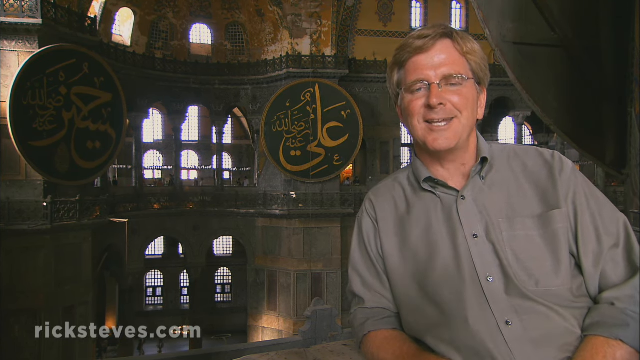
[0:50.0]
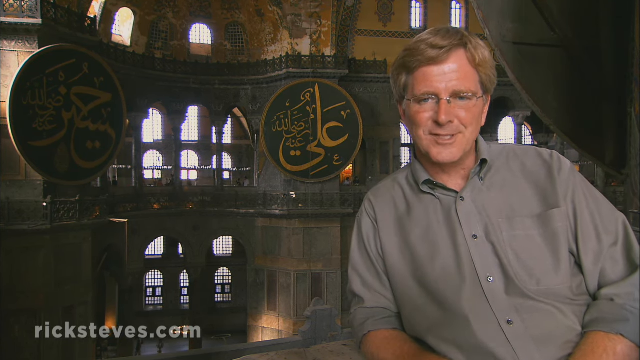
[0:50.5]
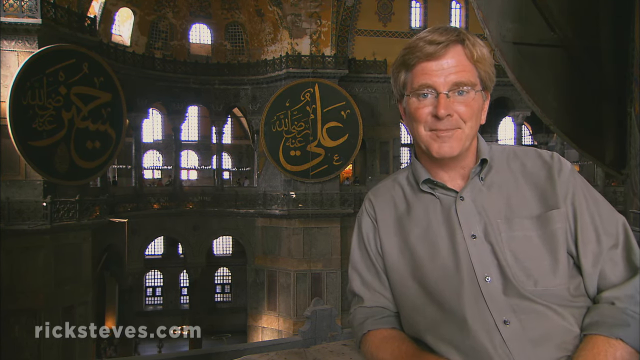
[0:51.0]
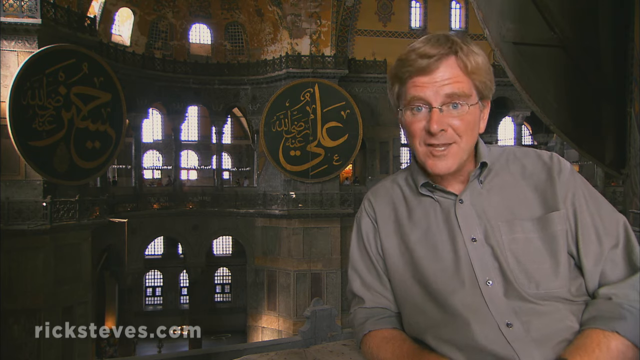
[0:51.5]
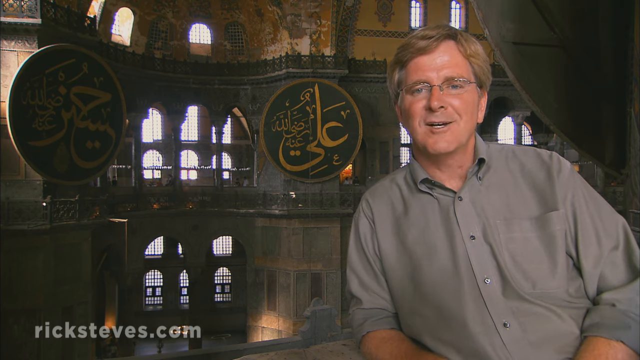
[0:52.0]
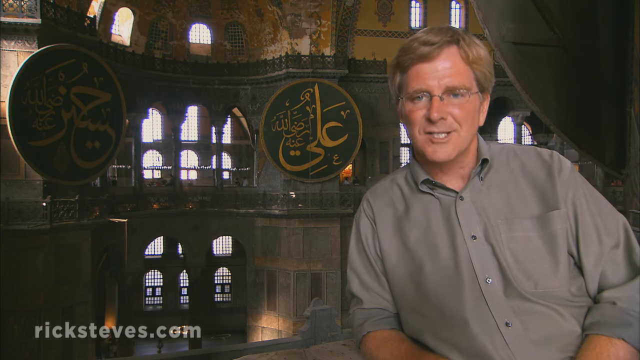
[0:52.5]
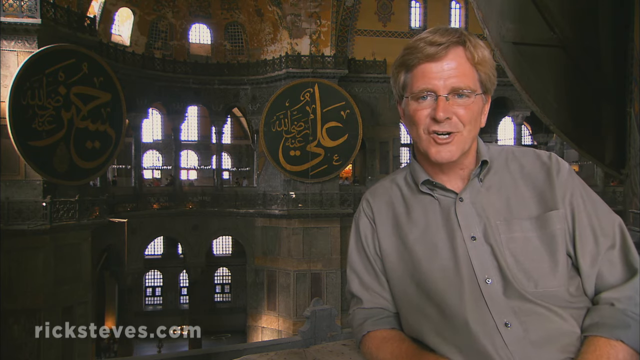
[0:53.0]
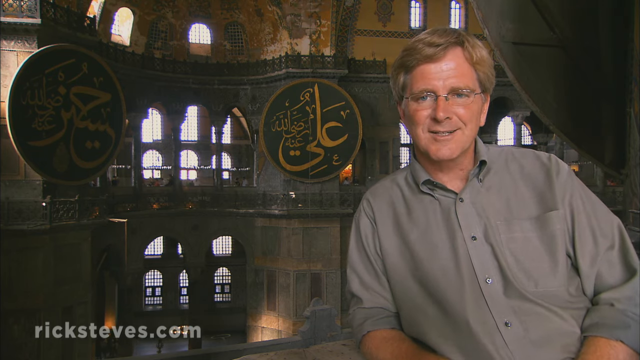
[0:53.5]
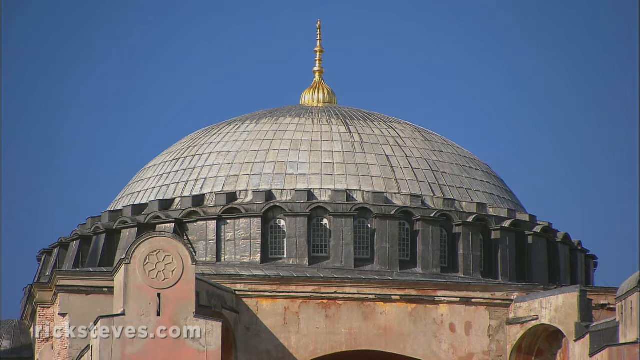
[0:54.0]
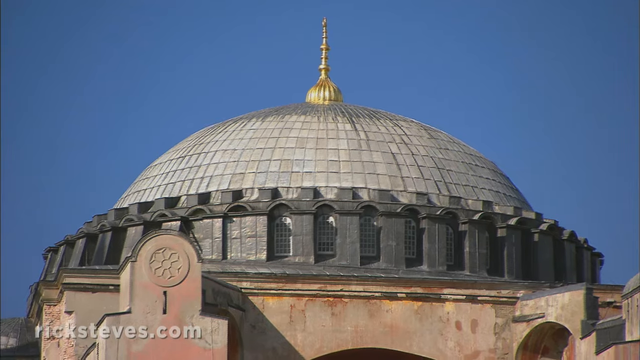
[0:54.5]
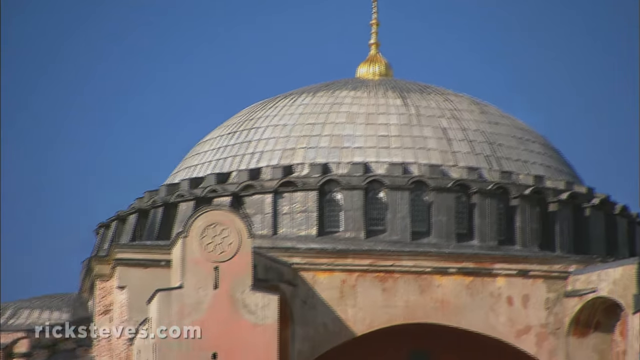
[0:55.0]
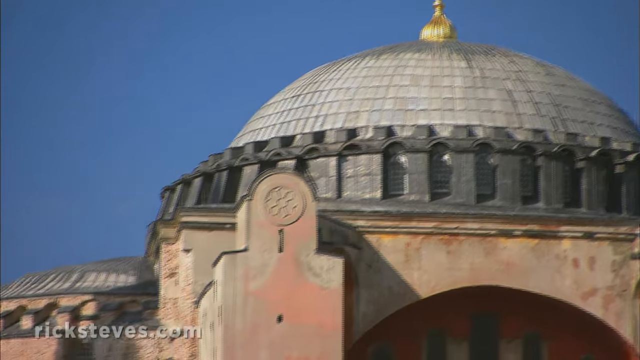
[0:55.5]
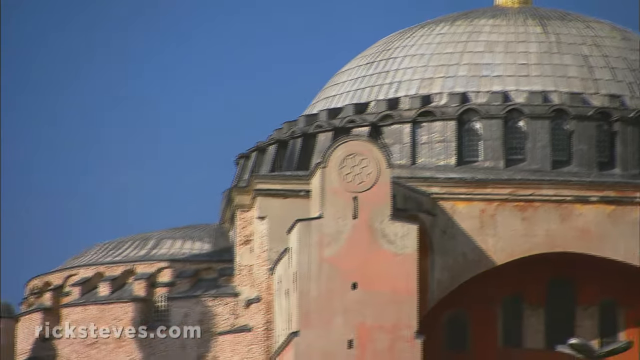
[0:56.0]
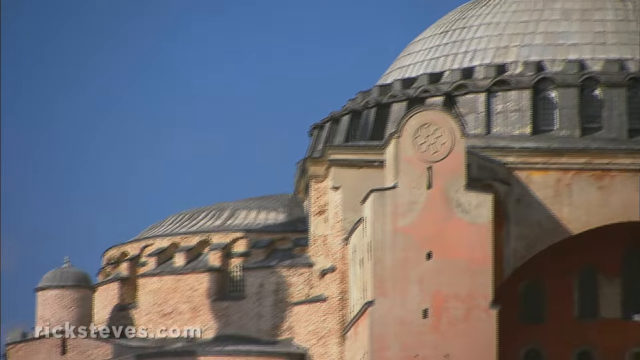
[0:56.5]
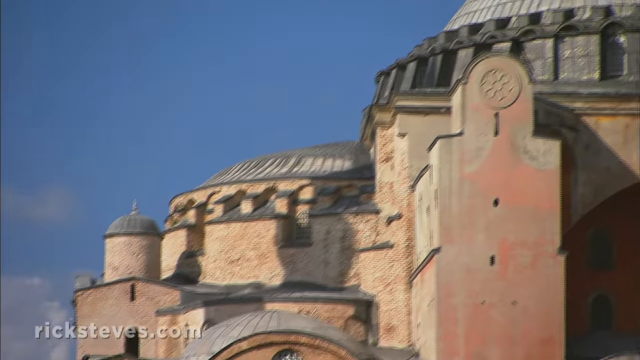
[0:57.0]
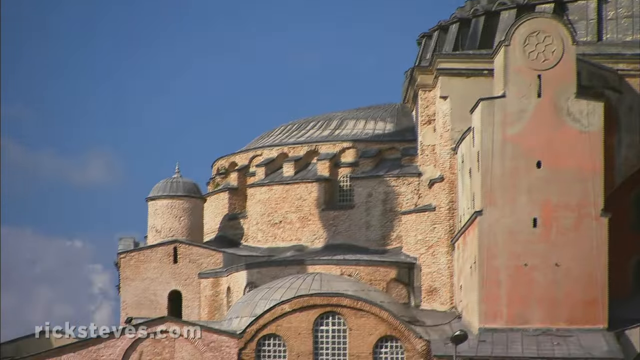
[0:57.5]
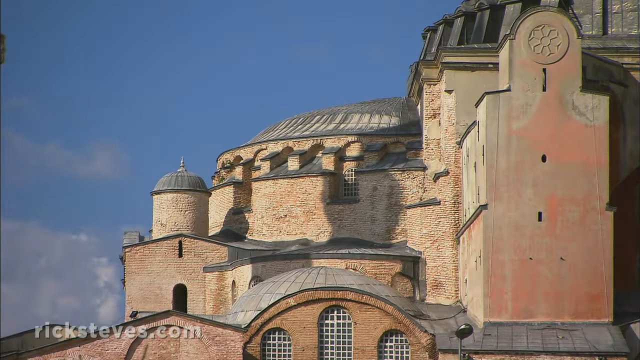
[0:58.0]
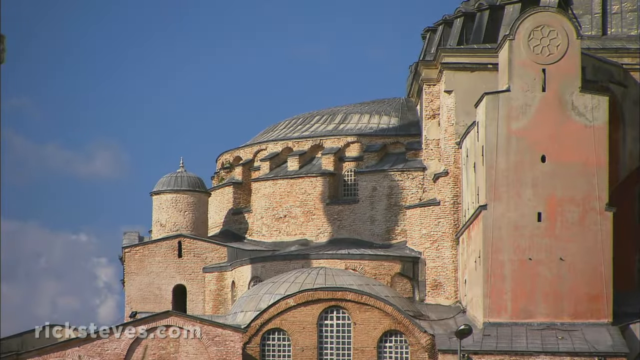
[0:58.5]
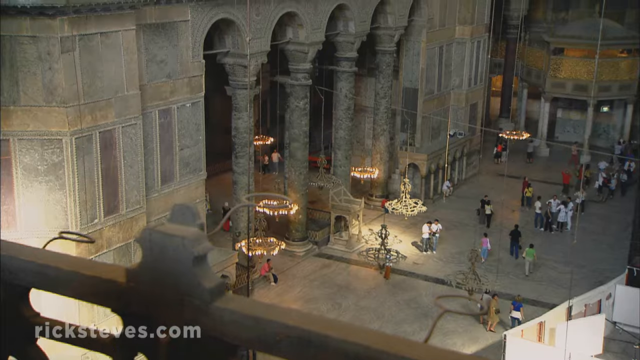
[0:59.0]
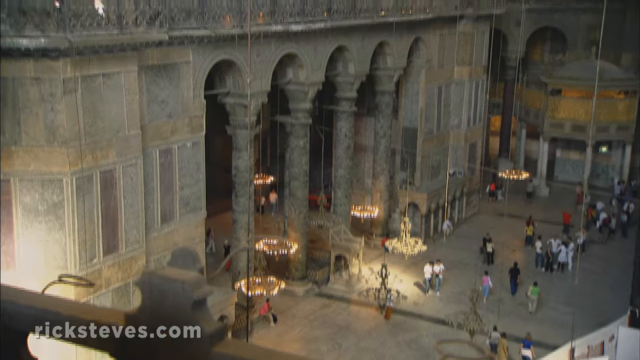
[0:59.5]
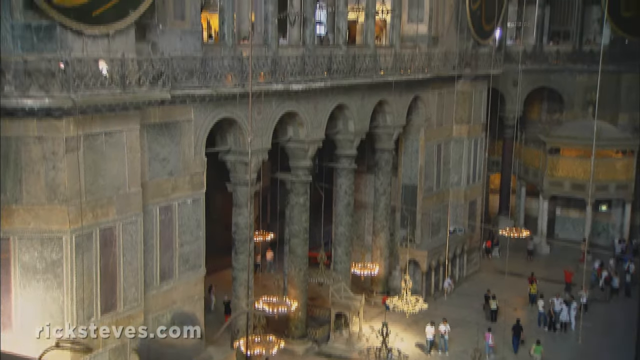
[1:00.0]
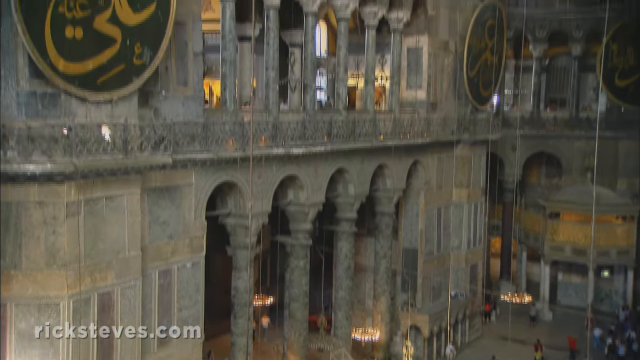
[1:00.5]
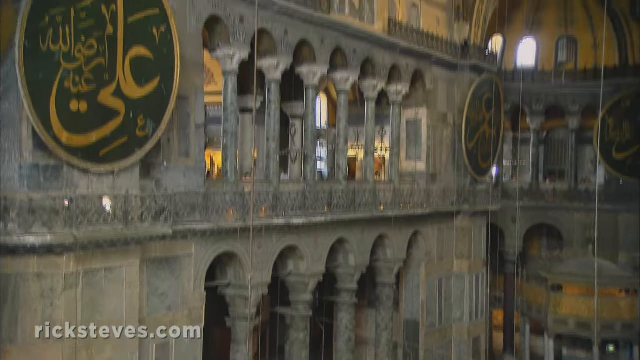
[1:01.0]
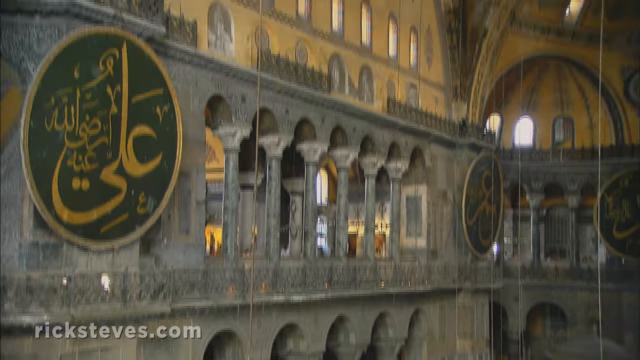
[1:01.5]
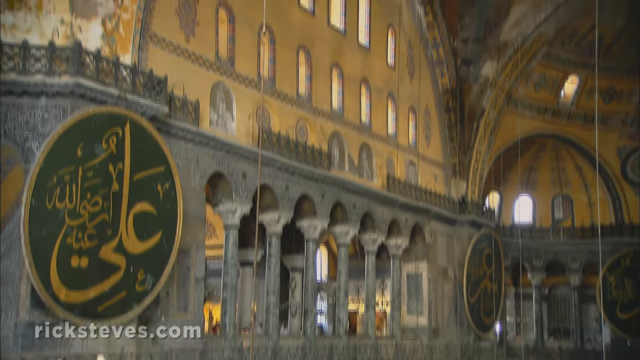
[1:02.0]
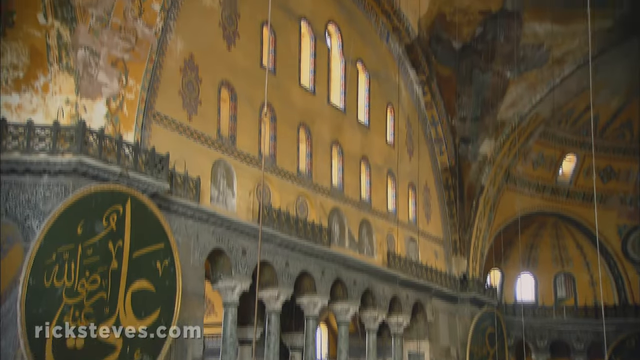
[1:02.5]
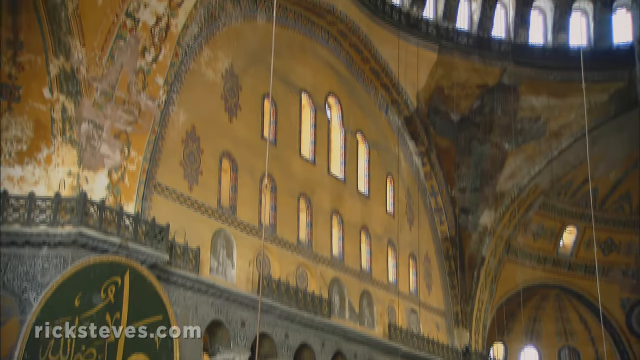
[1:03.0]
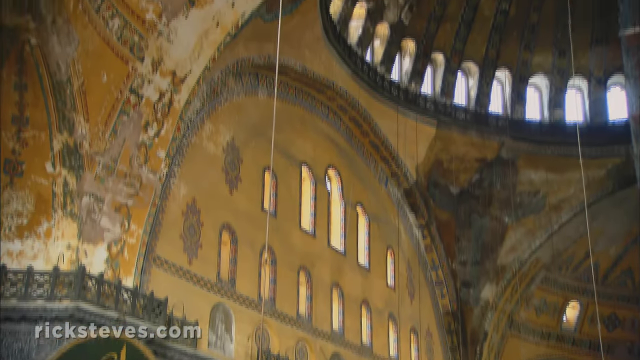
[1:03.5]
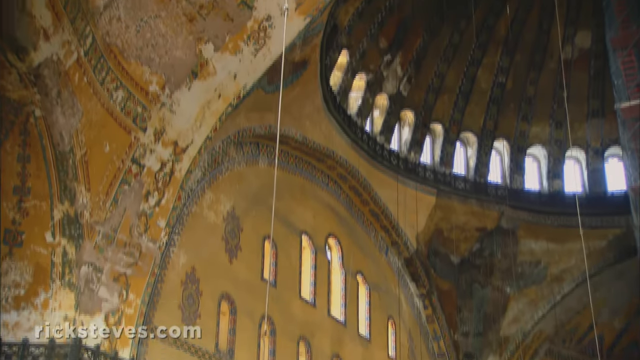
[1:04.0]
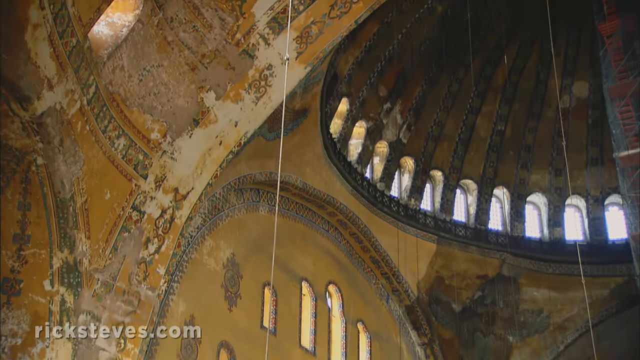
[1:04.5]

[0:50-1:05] Rick Steves stands behind the fancy Arabic designs, talking to the camera. When he finishes, the camera pans back to the view of the top of the building where he was, then pans down the side of the building, from the pillars at ground level to the second level with the circles of fancy Arabic designs, and shows the very top with its intricate patterns. Most of it is marked off. Rick Steves continues talking, introducing the building. It looks very intricate and well designed.